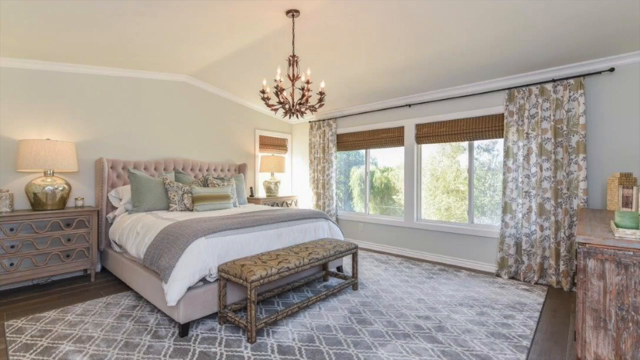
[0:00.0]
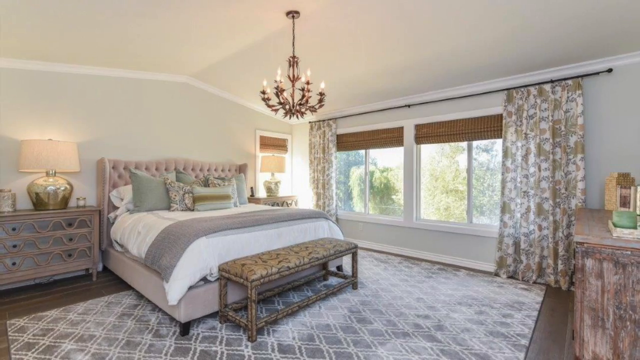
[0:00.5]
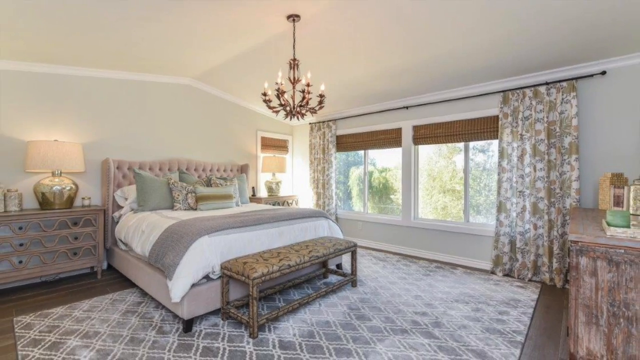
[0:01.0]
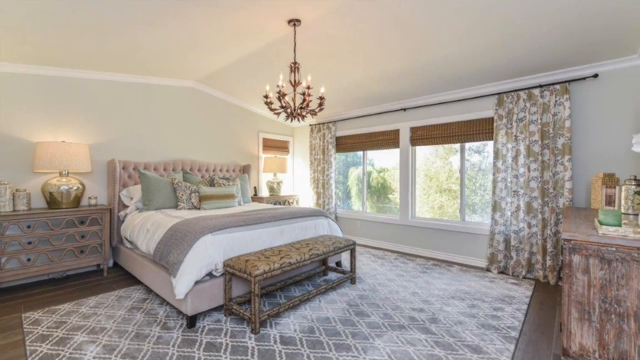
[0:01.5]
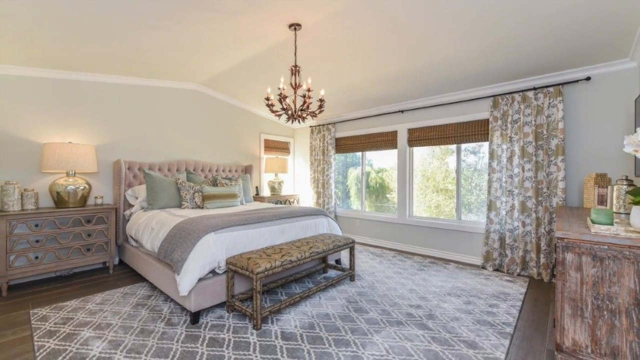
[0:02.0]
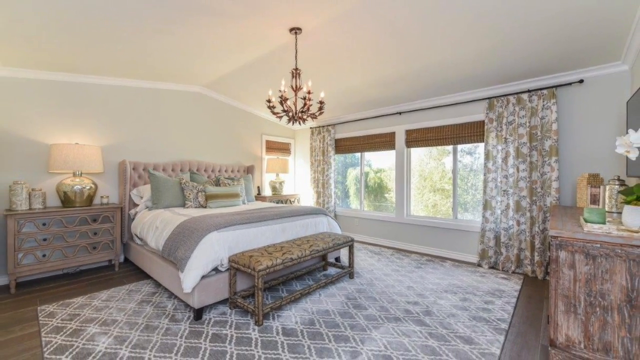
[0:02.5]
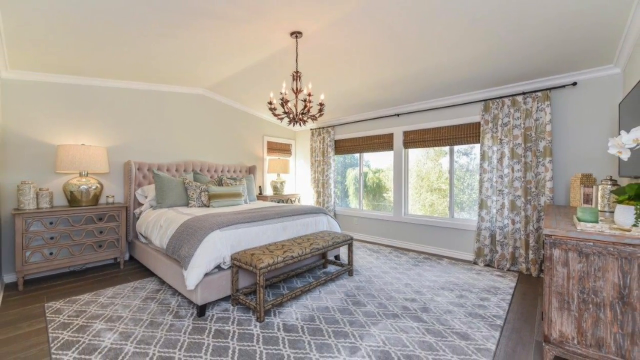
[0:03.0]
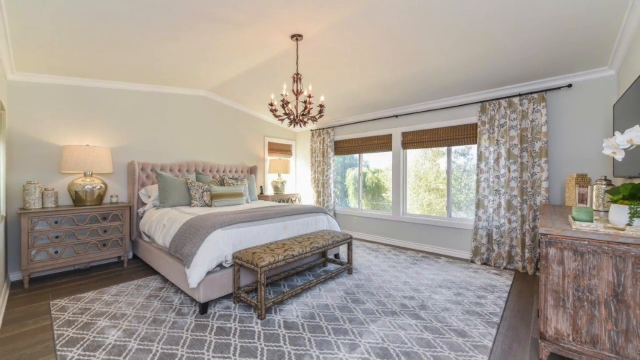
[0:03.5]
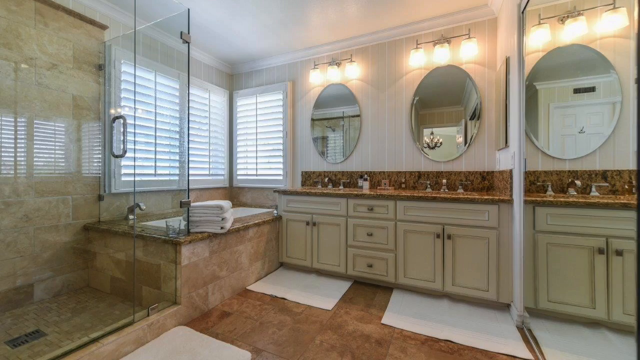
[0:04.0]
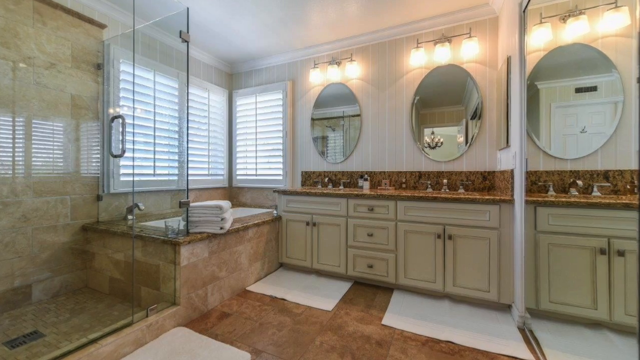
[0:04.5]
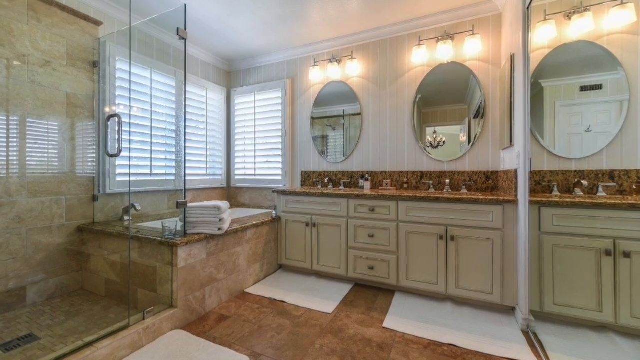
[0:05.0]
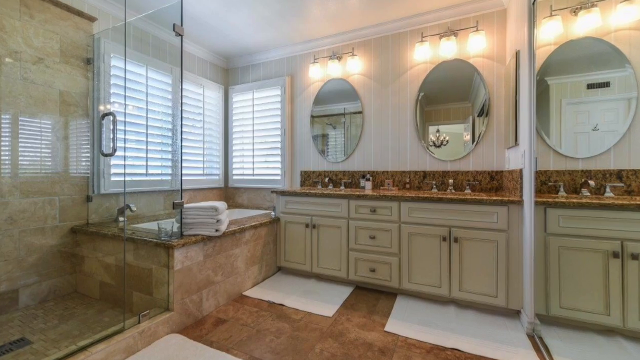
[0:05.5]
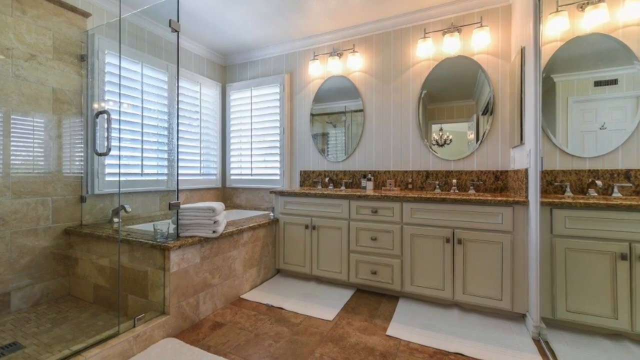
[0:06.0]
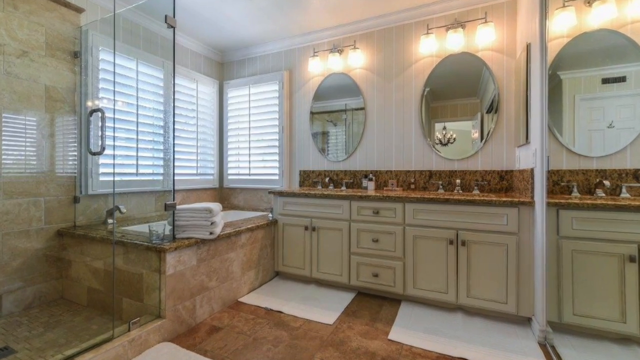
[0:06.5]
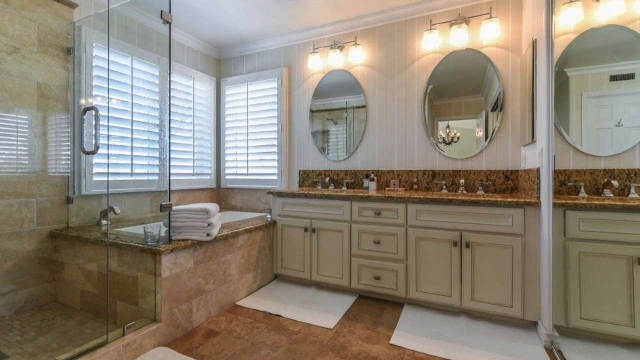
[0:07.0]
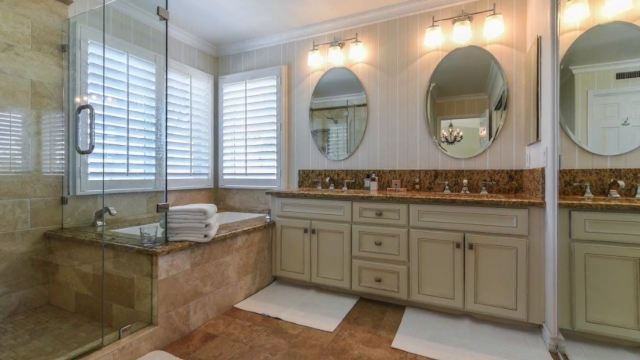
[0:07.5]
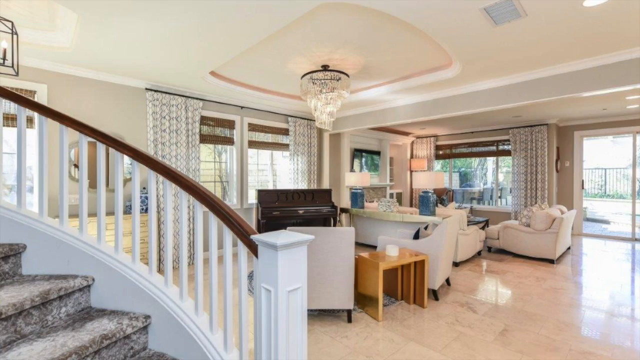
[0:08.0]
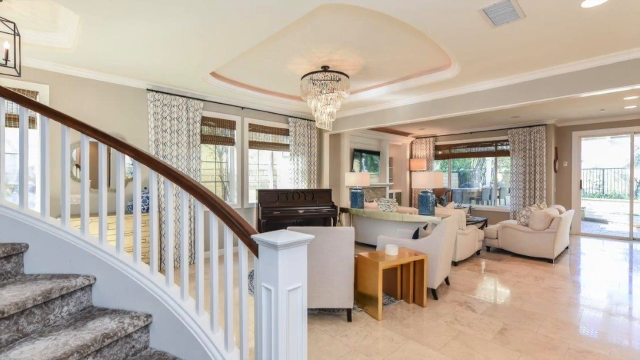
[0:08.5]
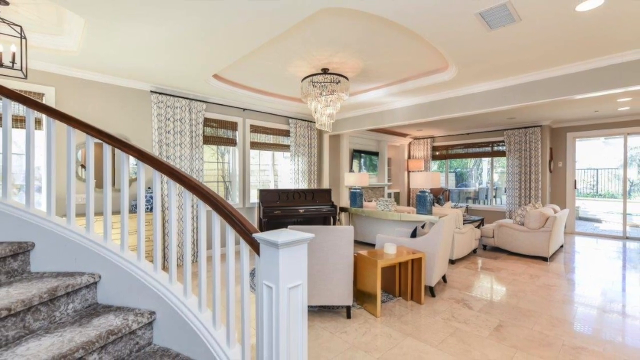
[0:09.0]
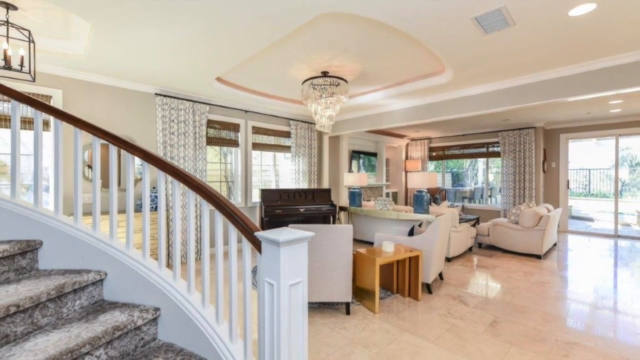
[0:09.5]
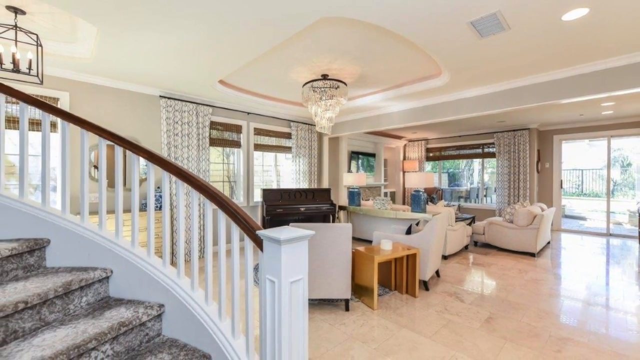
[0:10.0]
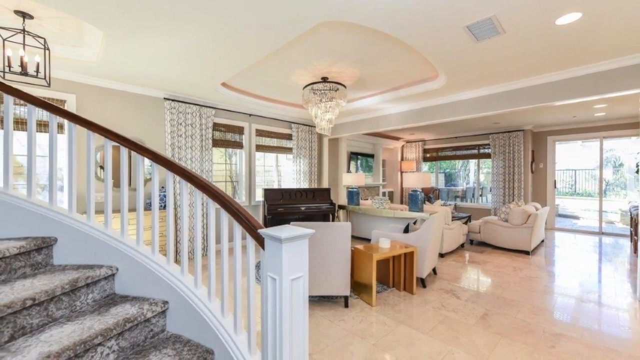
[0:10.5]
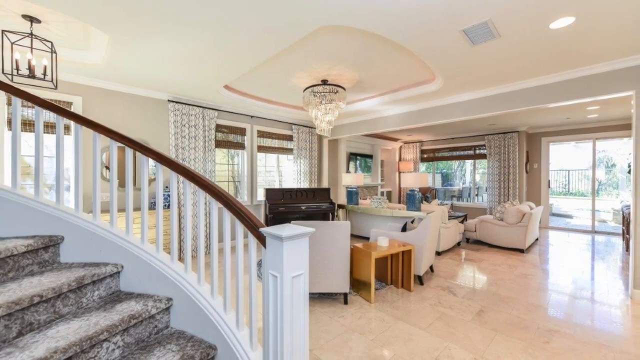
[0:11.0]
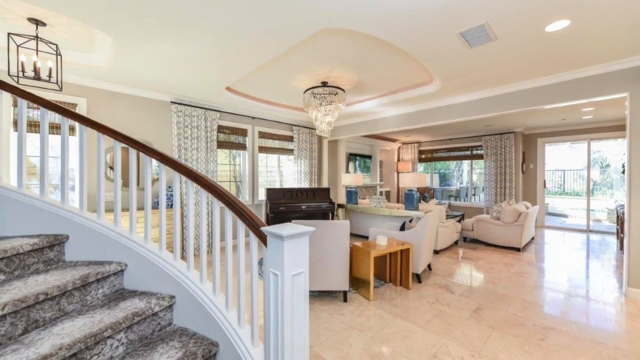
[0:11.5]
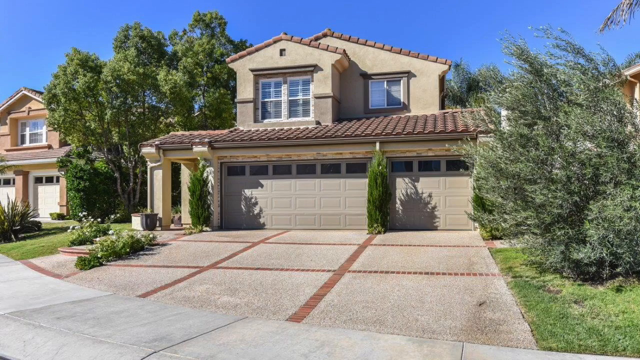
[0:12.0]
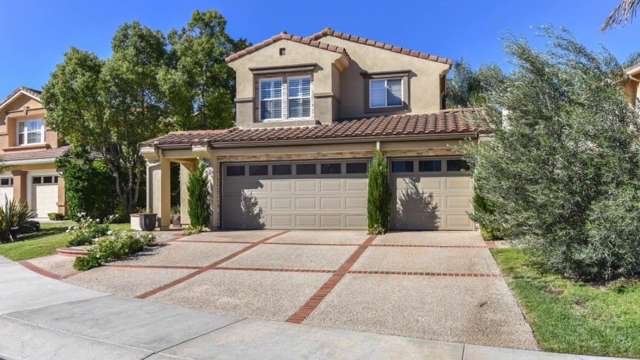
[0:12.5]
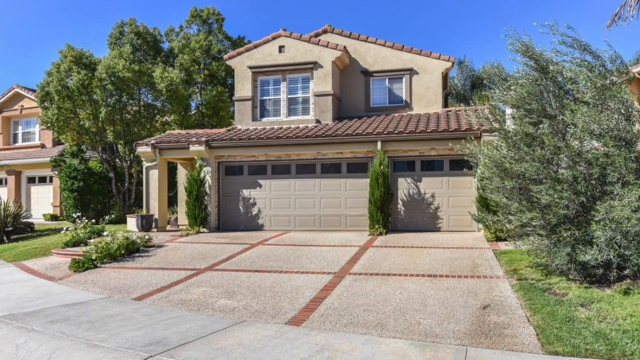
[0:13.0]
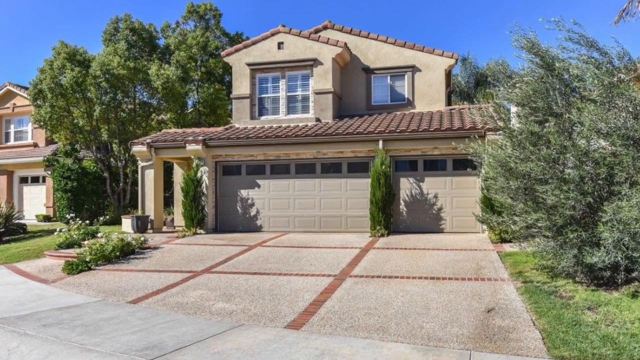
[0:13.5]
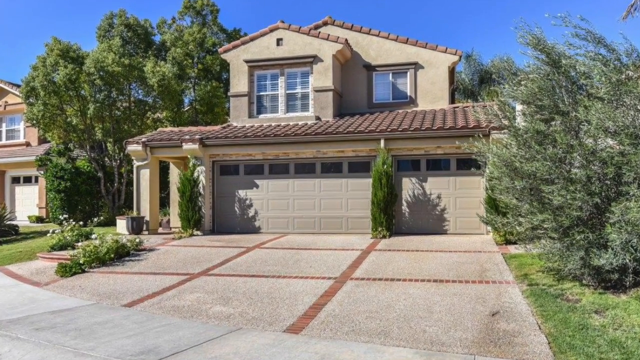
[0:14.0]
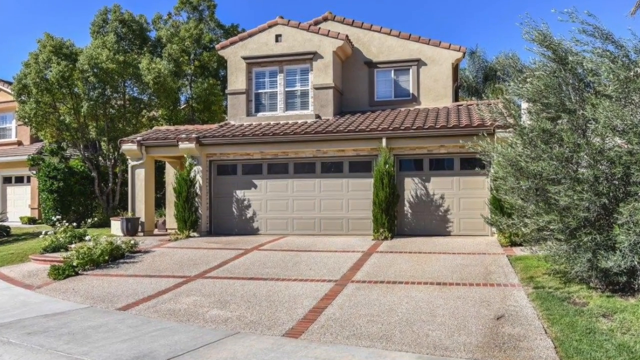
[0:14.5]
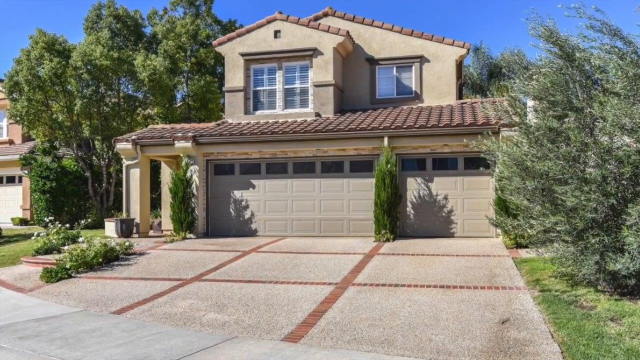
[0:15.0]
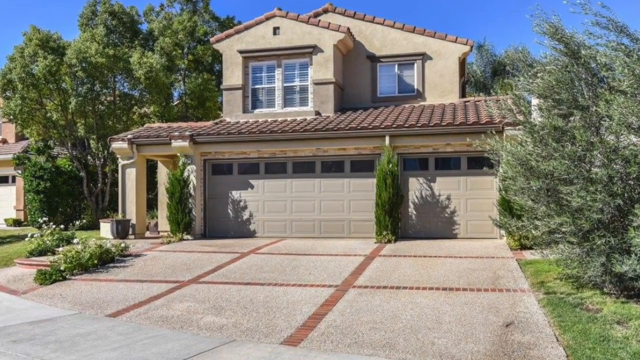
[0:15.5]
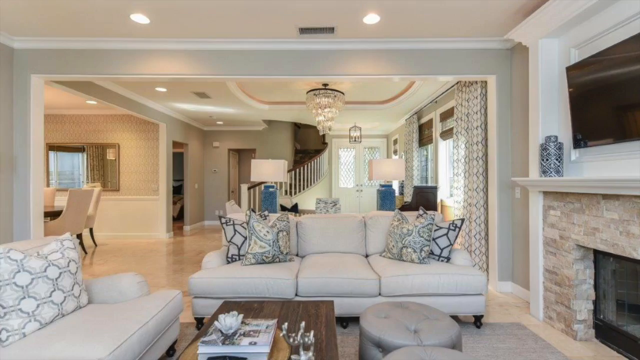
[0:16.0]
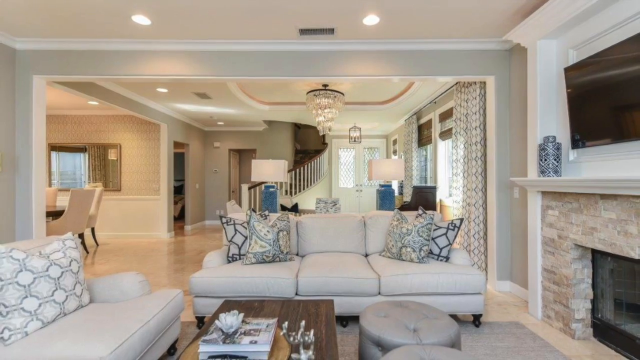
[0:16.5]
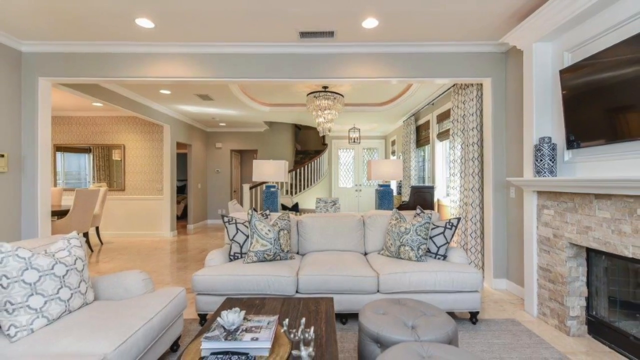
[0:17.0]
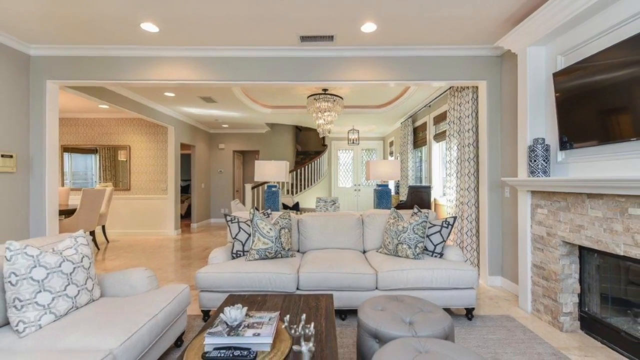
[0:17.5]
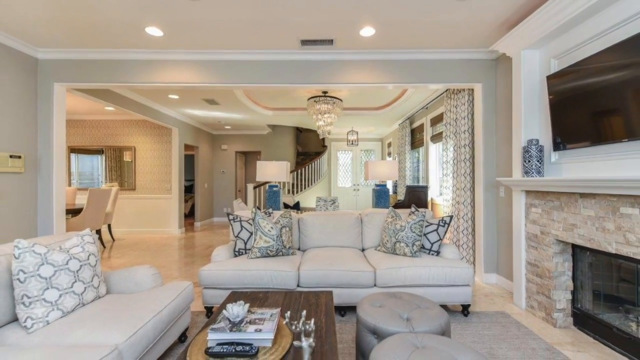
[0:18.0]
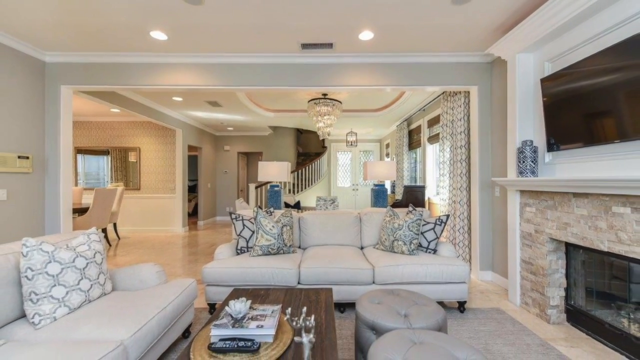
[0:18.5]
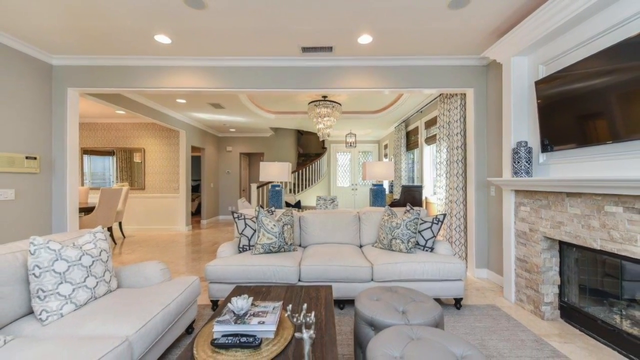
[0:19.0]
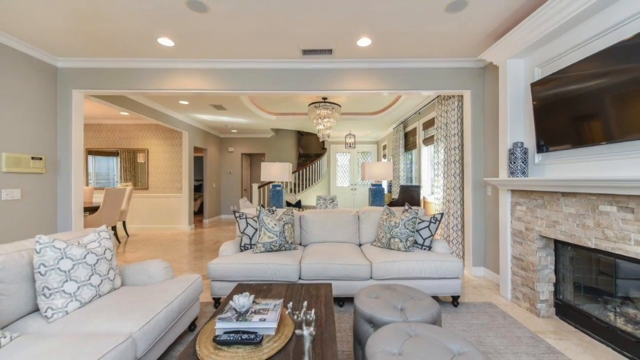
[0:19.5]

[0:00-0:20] This appears to be a marketing reel for a property, shot in landscape mode and in colour, made up of what seems to be a sequence of animated still images. The first shows the interior of a fancy bedroom with patterned carpet, big windows with blinds and curtains, a deluxe, kind of big double bed with a pink headboard, pink furniture, a bench and a cabinet. Next comes a fancy bathroom with a shower, a bath, marble terrazzo tiles, slatted horizontal blinds on the windows, his and her sinks with mirrors and lamps, and other mirrors on the wall; this shot has a slow push in. It transitions to a push out on a photo of the living area, which has a curved white staircase at the bottom left, a piano in the distance, bits of furniture, a marble floor, a fancy light fitting on the ceiling, lots of light streaming in, and what look like air conditioning vents. The video cuts to a picture of the outside of the property, which looks like it is somewhere hot, probably Florida or possibly a nice part of South Africa. It has wide driveways and parking for maybe three cars in garages, a shallow pitched roof with terracotta tiles and a pale, kind of yellowy exterior. Then comes an interior shot again, a reverse shot of the living area with sofas in the foreground and lots of scatter cushions, a tiny table tucked around on the left and the curved staircase in the distance.